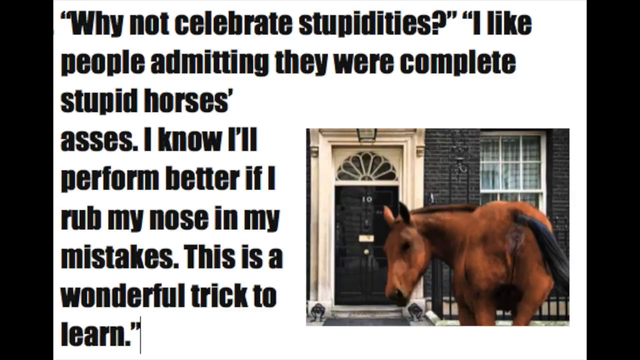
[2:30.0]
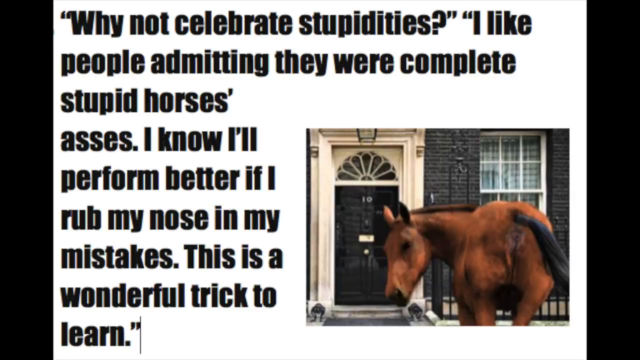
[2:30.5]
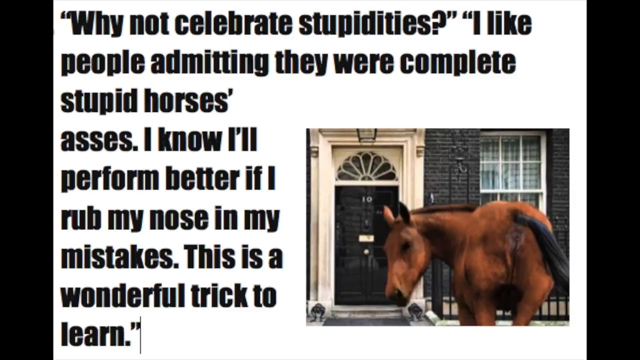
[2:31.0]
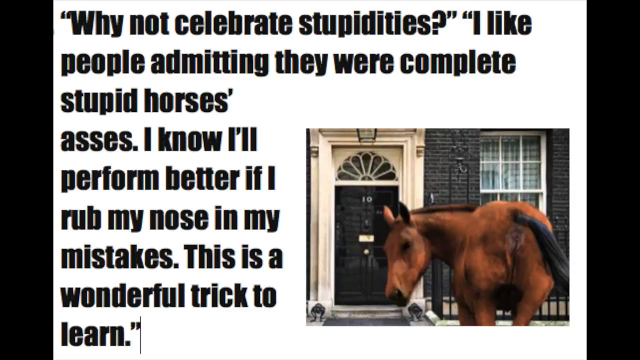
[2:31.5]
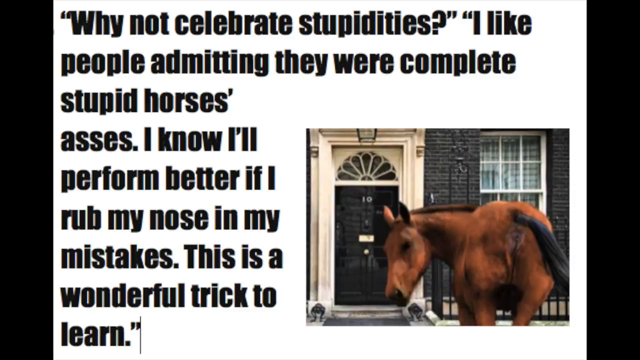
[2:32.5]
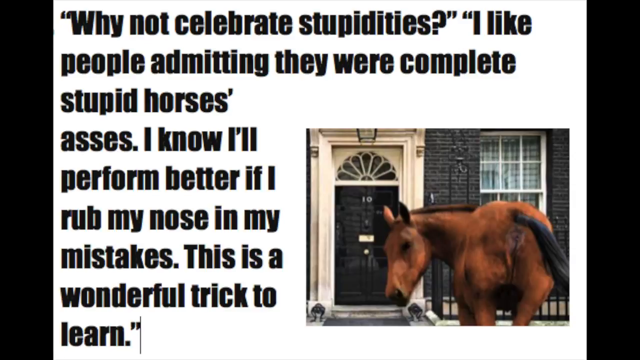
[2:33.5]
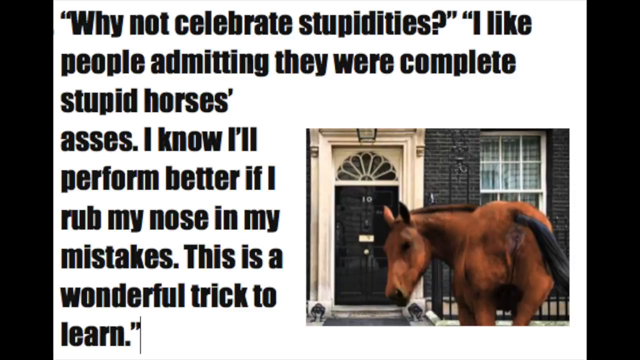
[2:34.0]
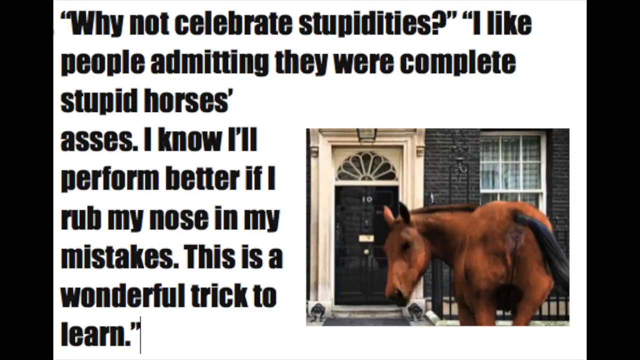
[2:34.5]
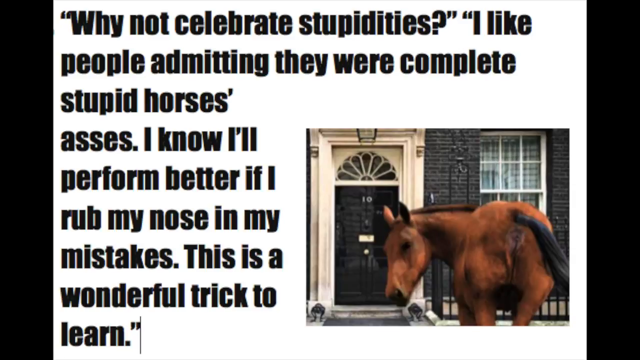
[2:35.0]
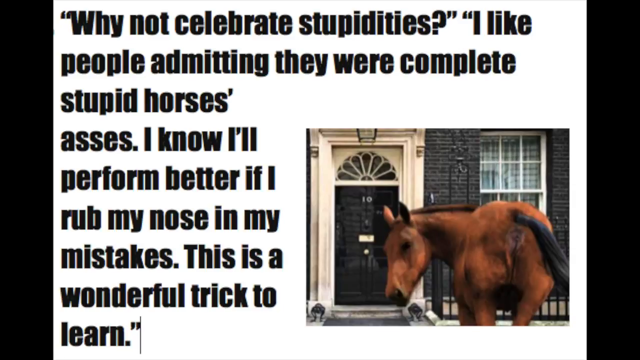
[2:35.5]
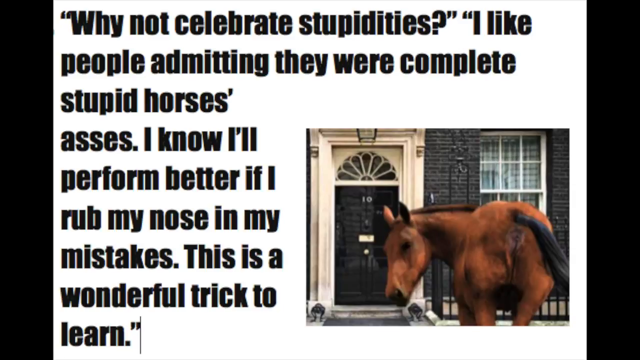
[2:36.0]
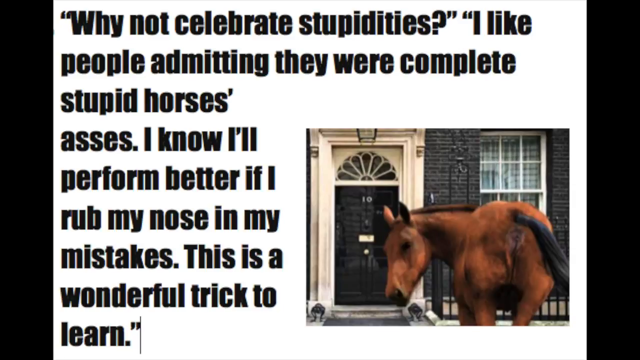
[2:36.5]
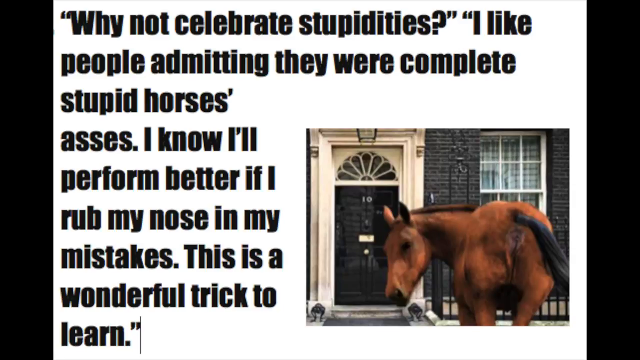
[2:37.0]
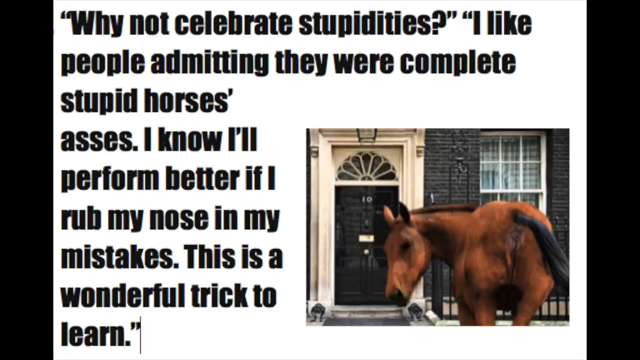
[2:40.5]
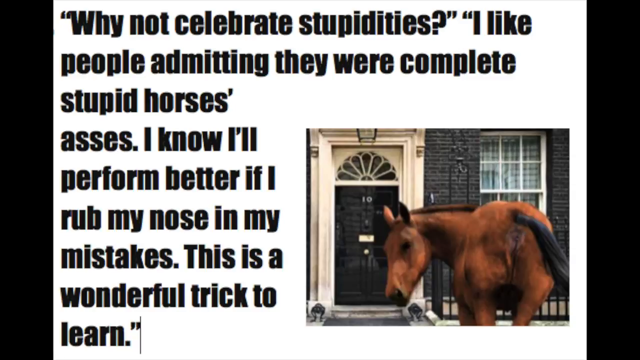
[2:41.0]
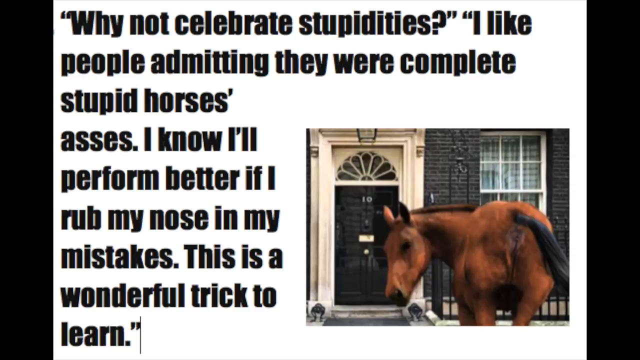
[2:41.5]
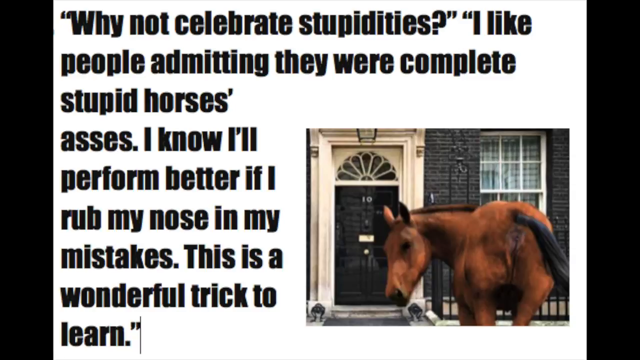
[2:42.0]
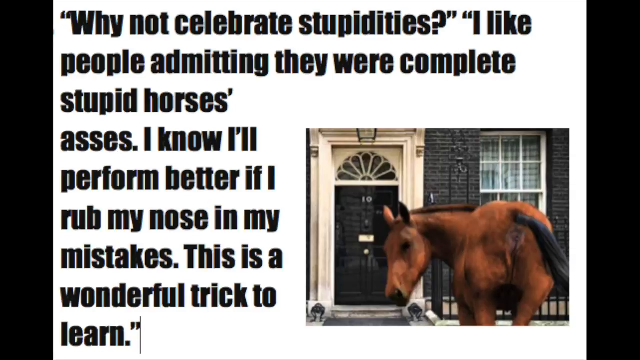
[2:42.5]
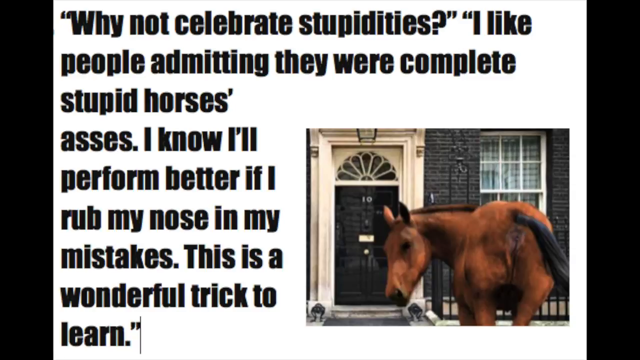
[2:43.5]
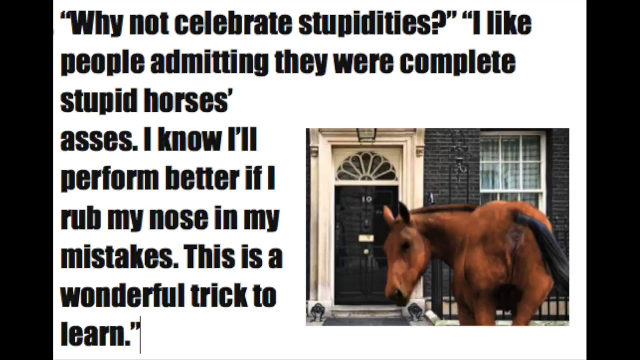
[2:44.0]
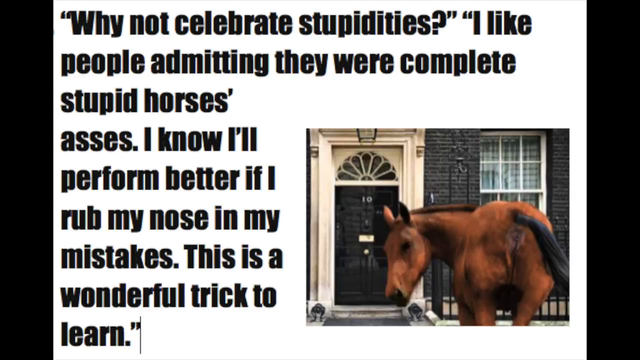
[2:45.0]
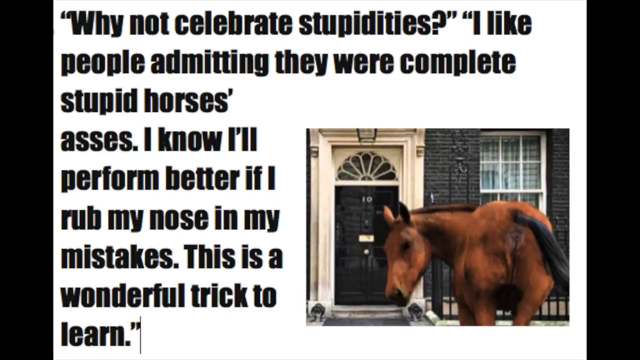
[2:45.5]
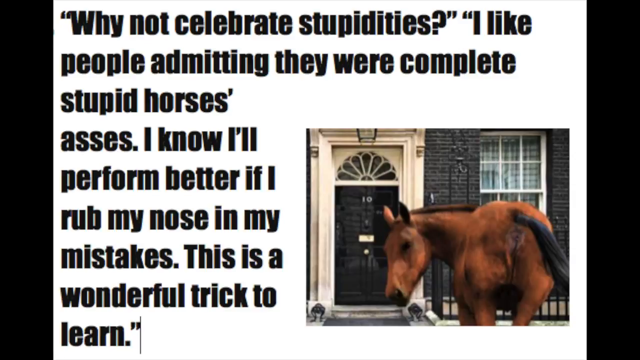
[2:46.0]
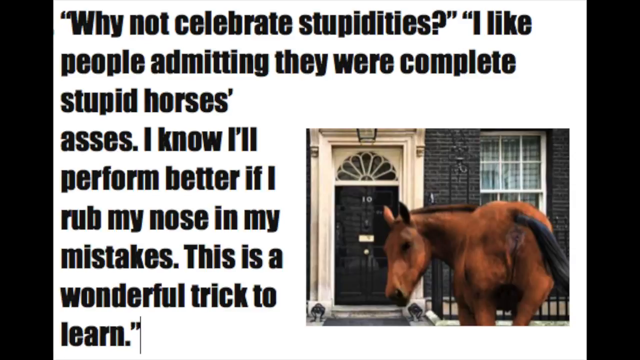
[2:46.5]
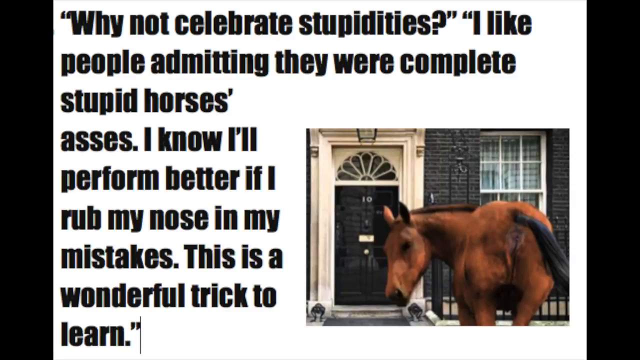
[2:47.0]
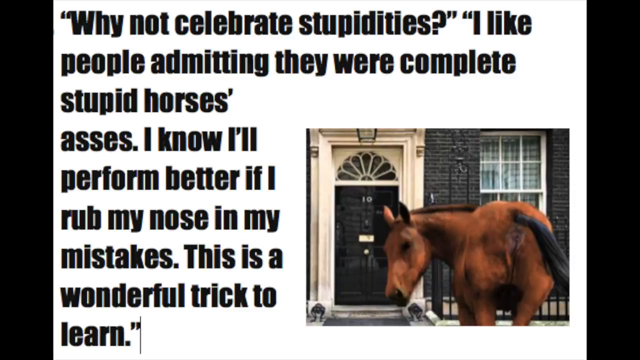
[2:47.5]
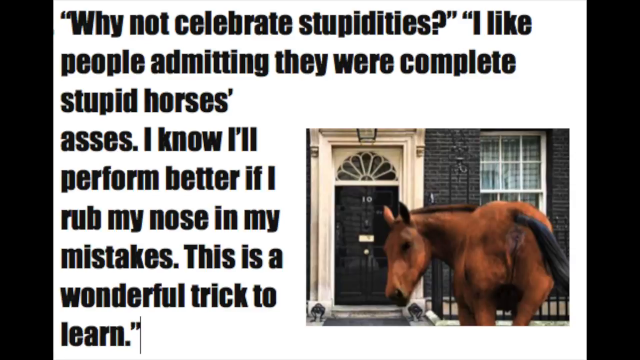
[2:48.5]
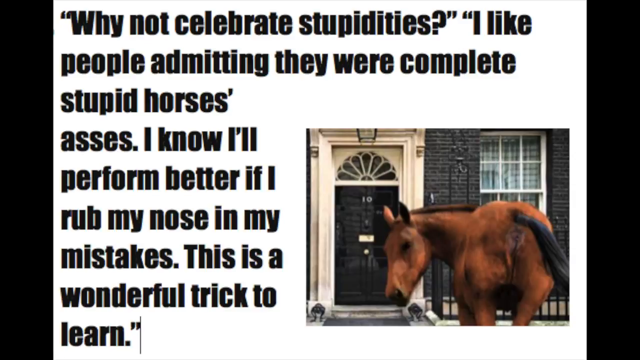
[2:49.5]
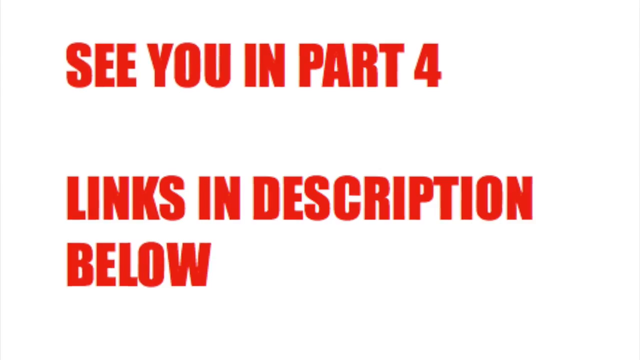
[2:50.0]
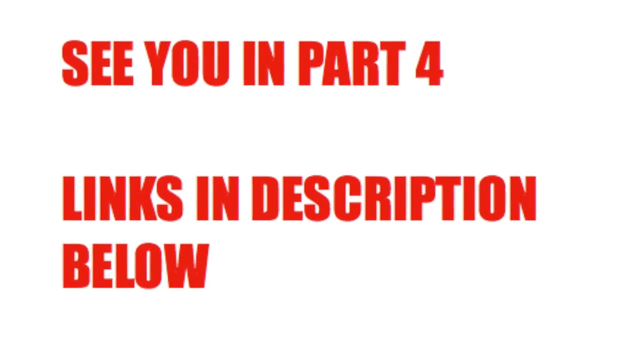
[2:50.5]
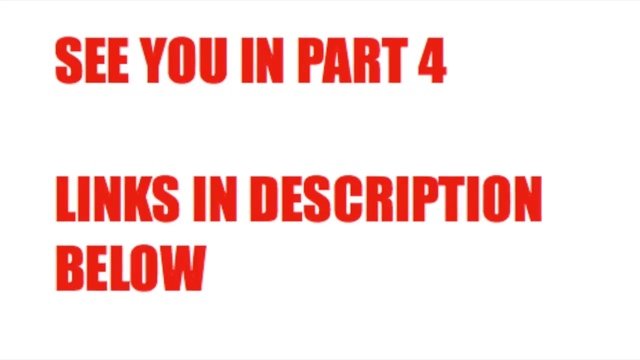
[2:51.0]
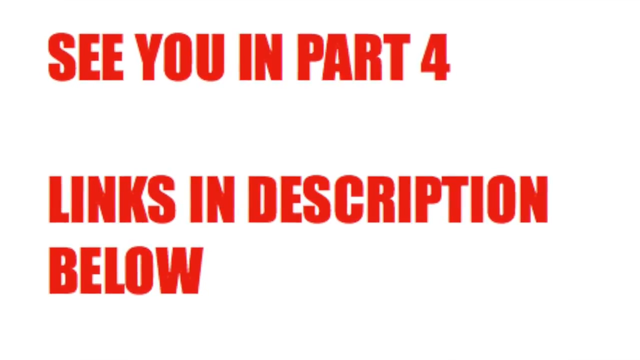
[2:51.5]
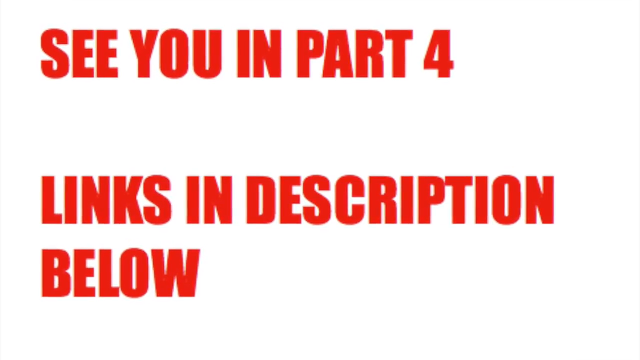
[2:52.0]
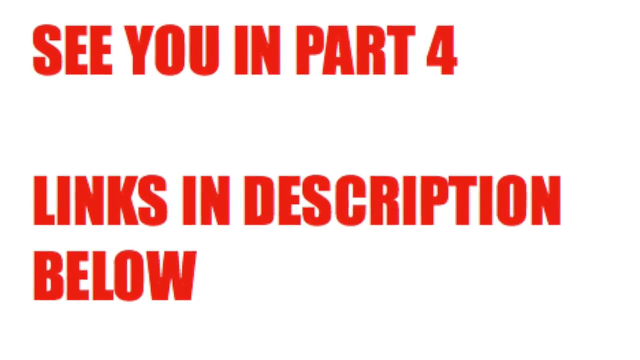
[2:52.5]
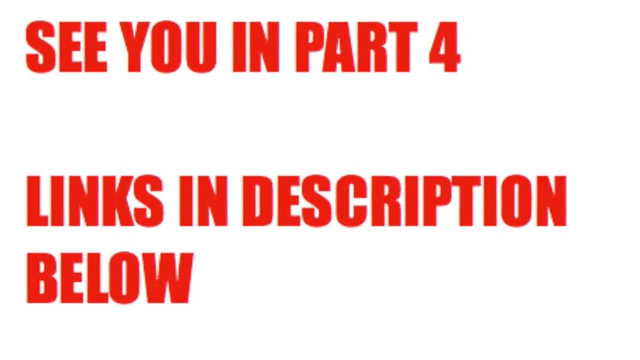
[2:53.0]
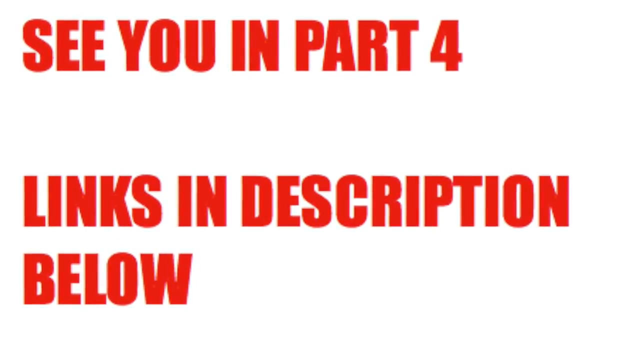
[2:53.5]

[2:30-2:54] An image on the right shows a horse standing in front of a door with the number 10 on it. The horse is looking back at the viewer, and its tail is moved to the side, giving a plain view of its rear, including the anus; it seems to be moving its tail out of the way on purpose. The rest of the screen is a white background with a black outline around the top, bottom and sides, and a message in quotes reads: "Why not celebrate stupidities? I like people admitting they were completely stupid horse's asses. I know I'd perform better if I rubbed my nose on my mistakes."